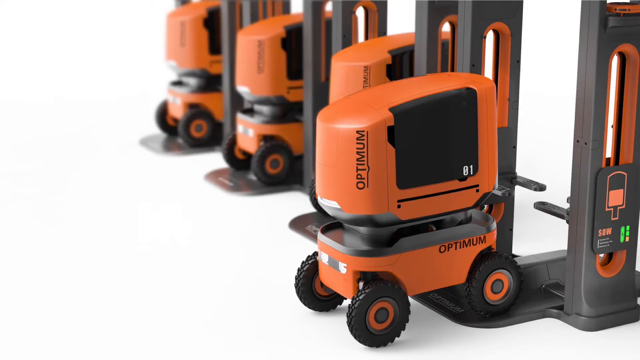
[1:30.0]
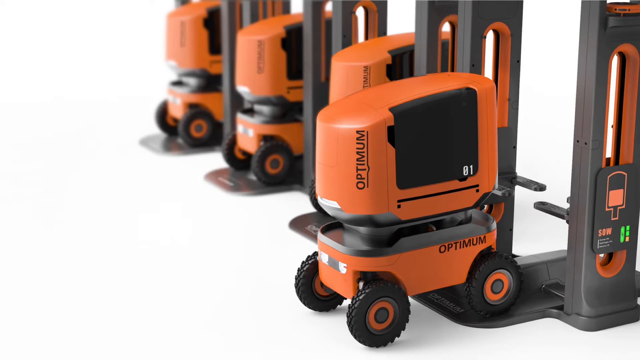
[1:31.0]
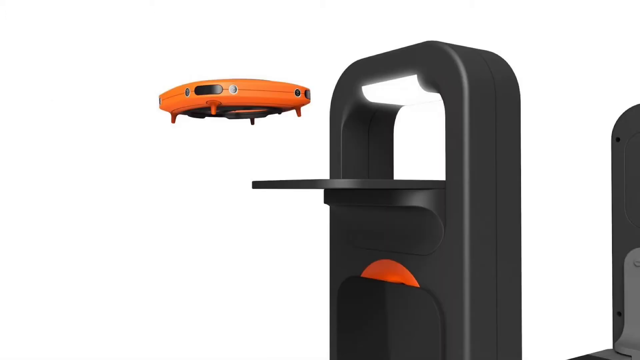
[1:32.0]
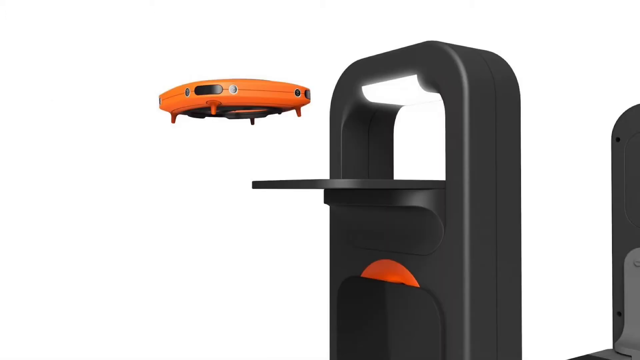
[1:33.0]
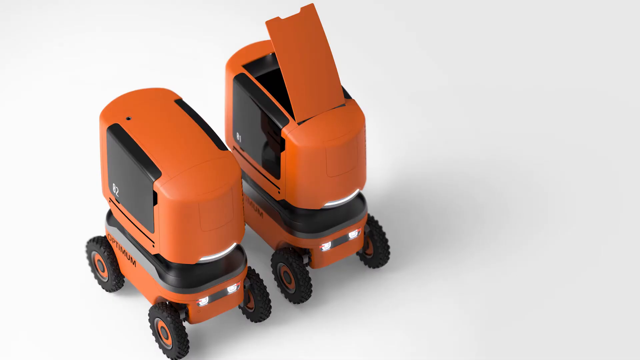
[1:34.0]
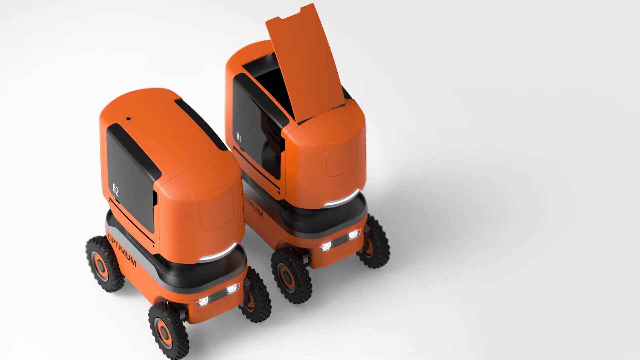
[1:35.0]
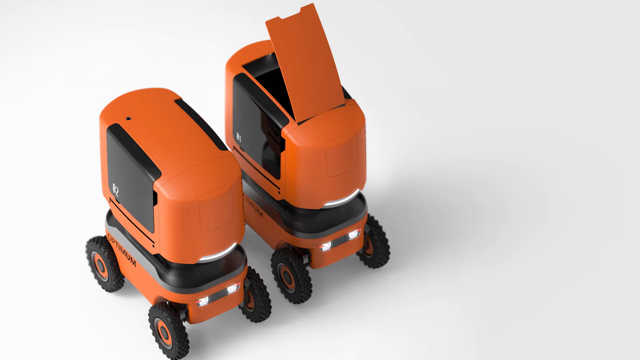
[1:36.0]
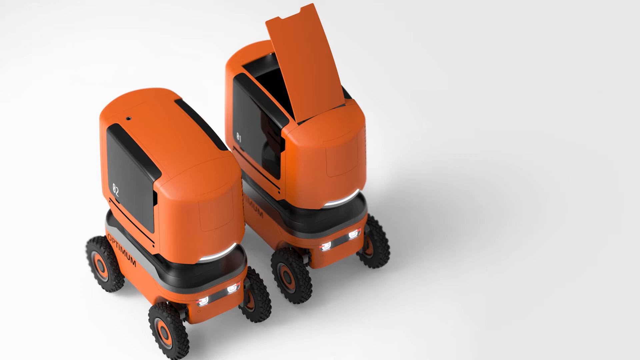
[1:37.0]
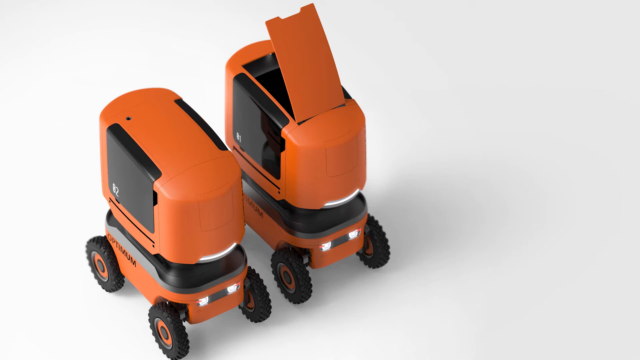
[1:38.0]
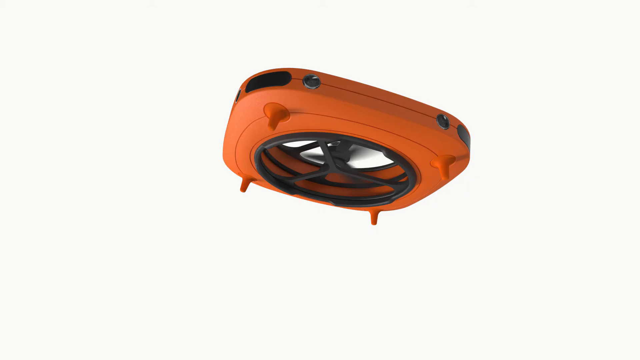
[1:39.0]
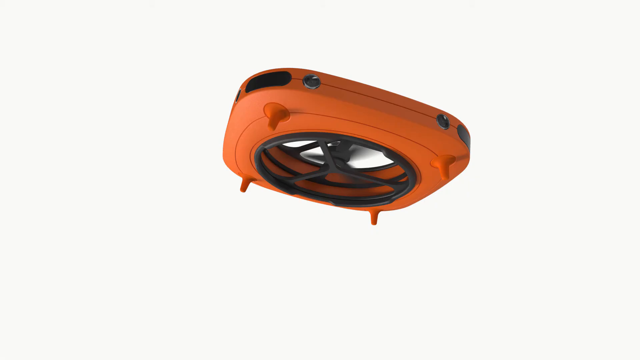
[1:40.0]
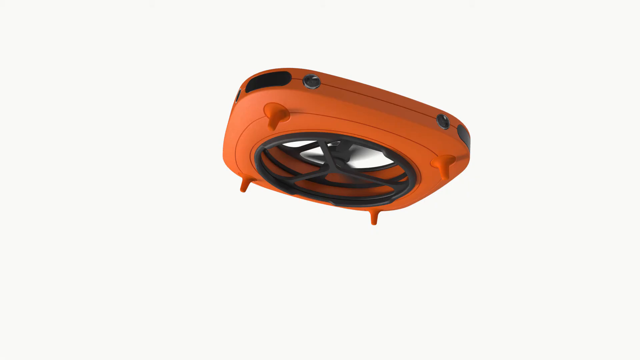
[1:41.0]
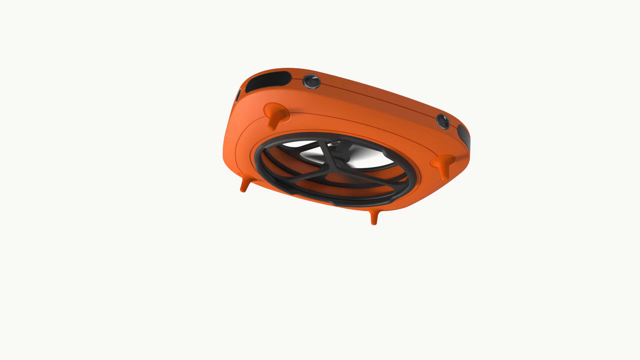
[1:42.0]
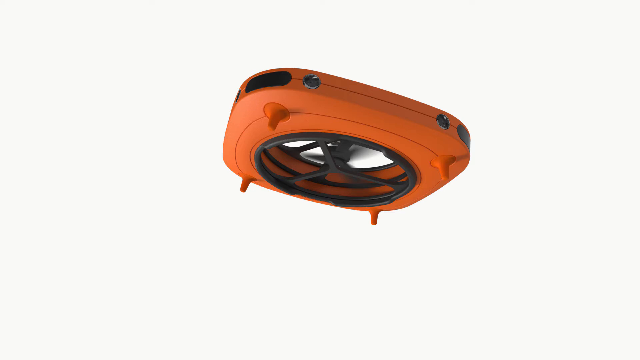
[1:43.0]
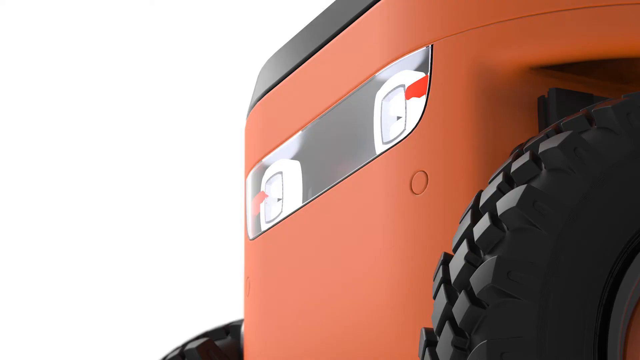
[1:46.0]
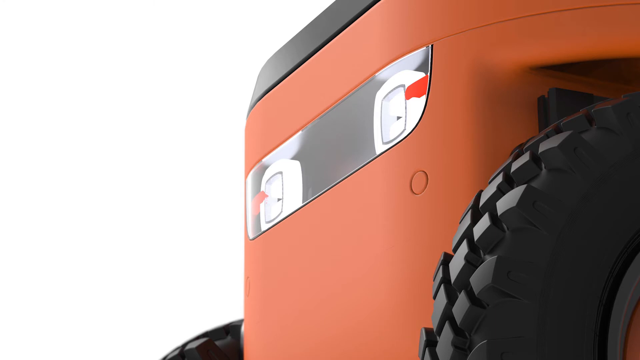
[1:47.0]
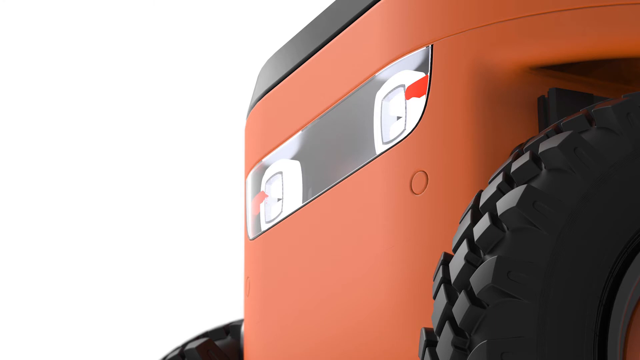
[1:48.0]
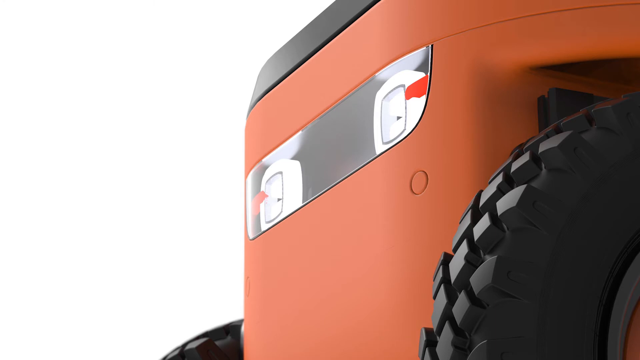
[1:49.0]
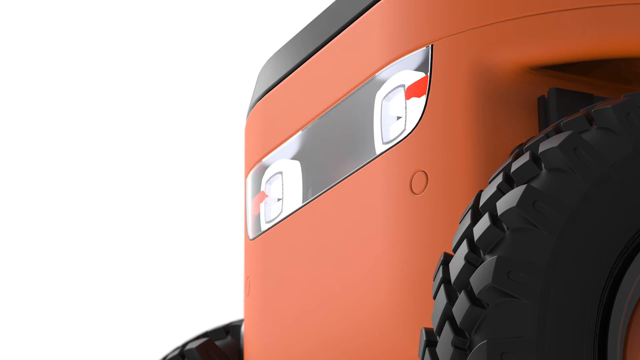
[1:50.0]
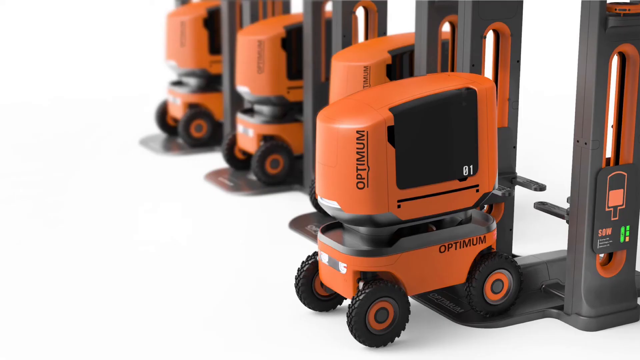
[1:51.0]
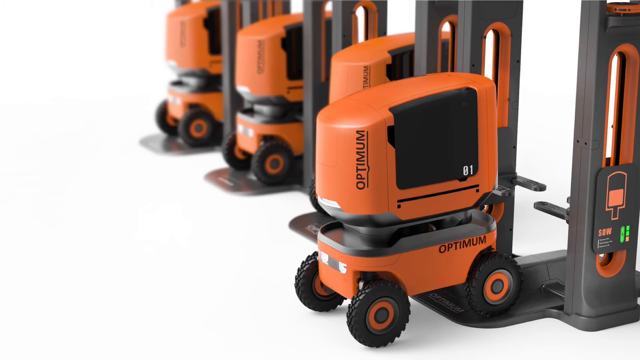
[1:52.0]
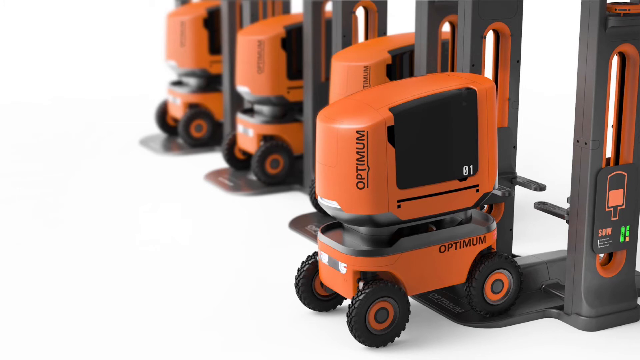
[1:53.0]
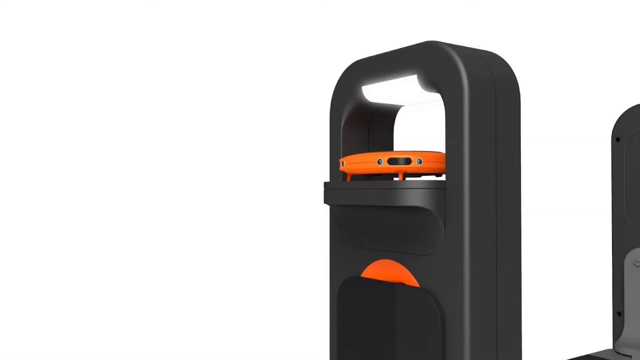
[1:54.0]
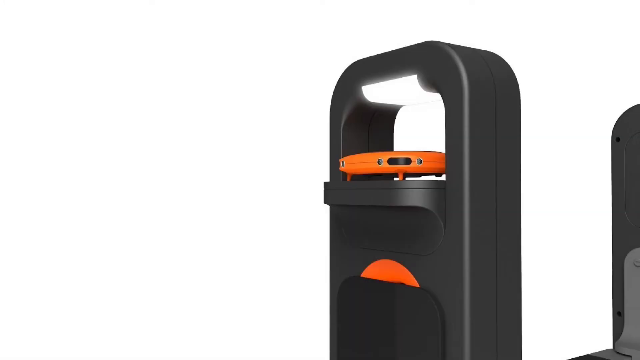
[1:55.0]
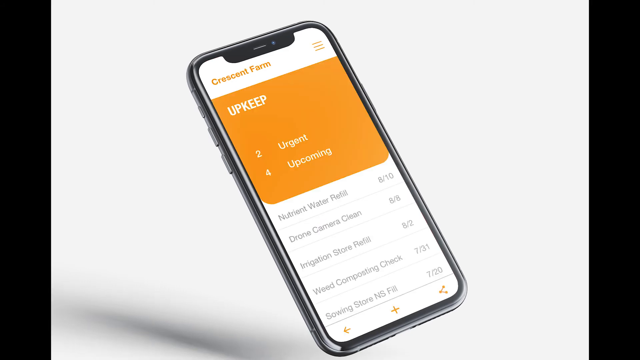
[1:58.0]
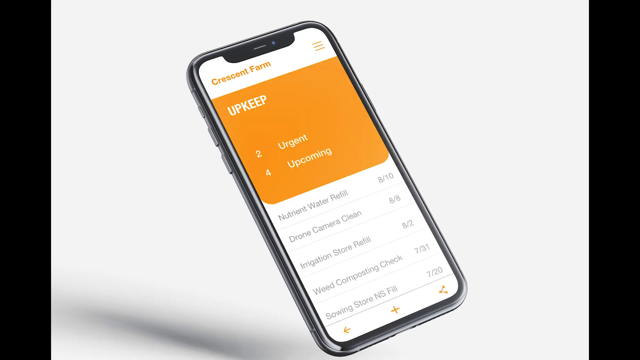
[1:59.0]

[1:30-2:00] Drone ports are shown along with a couple of the orange drones, one with a hatch at the top being lifted, and a floating drone seen from underneath with its fan or blade spinning in the middle of its square orange body. A short close-up shows its headlights, which are square white lights inside a glass case. Throughout, various images of these drones and machines appear on a white background, all appearing to be graphic drawings or graphic models of the machines. At the end, a rectangular smartphone with a white screen shows orange buttons labeled "Data", "Plans", "Upkeep", and "Stats", with "Crescent Farm" in orange text at the top left. After that, another screen is labeled "Upkeep" at the top, and beneath it are the numbers 2 and 4, with "Urgent" beside the 2 and "Upcoming" beside the 4.